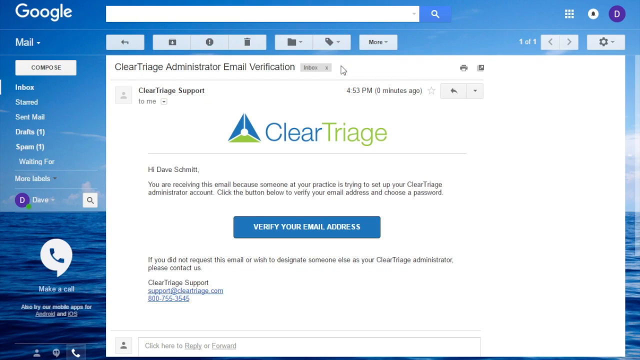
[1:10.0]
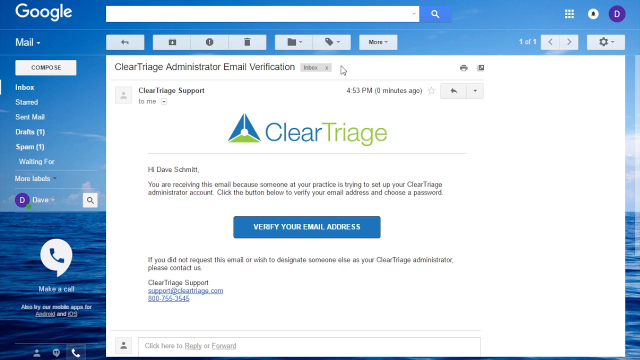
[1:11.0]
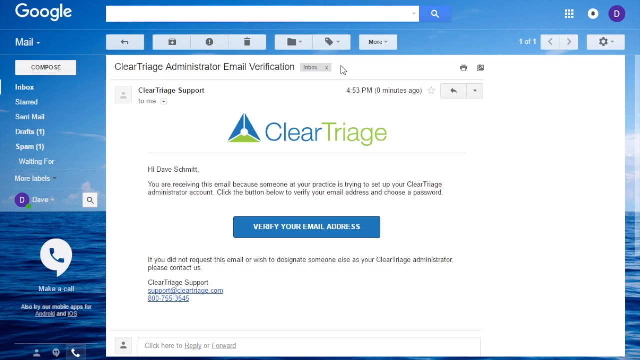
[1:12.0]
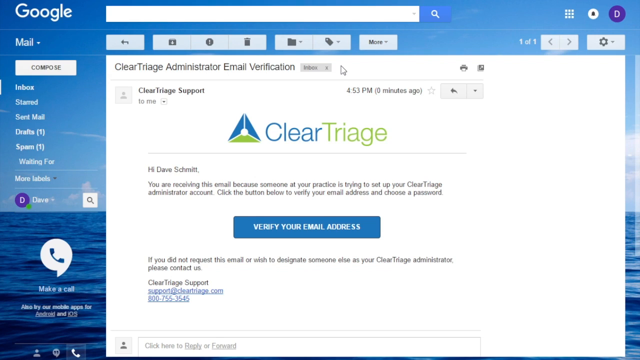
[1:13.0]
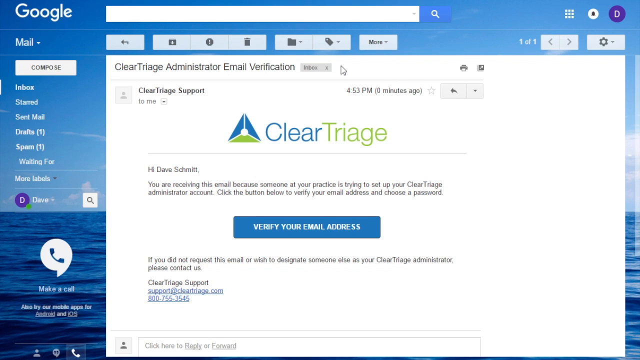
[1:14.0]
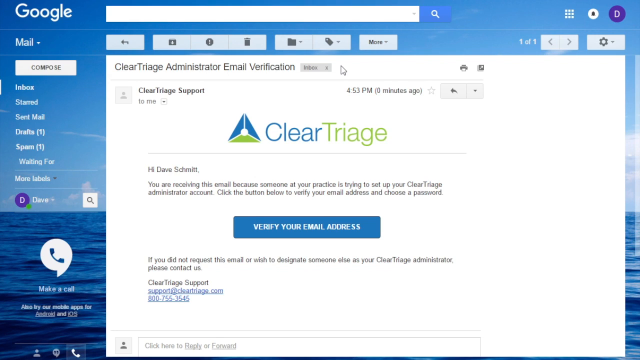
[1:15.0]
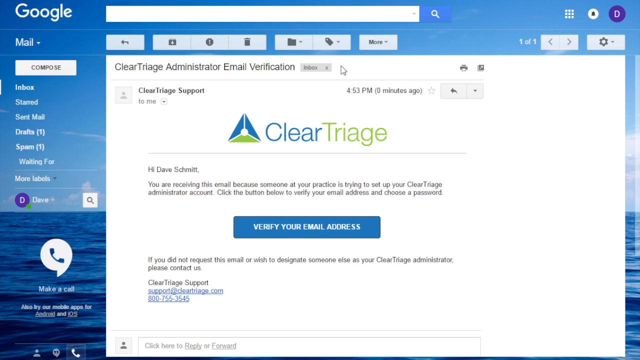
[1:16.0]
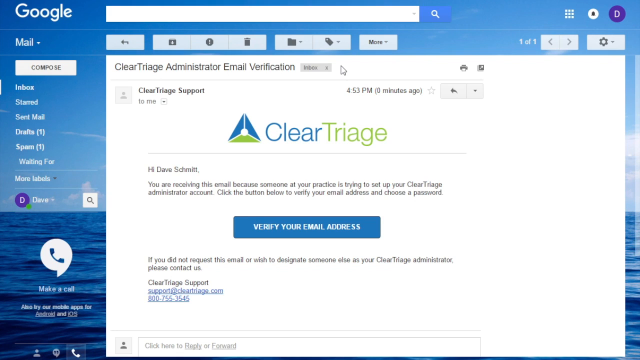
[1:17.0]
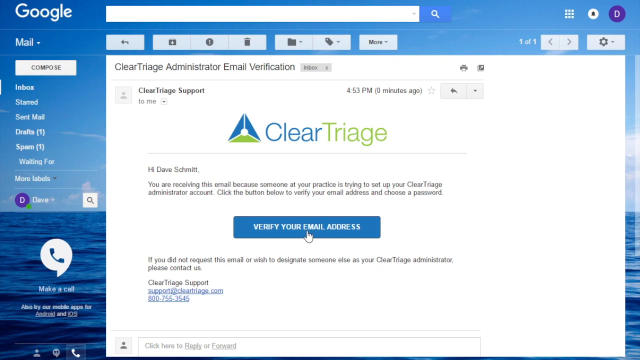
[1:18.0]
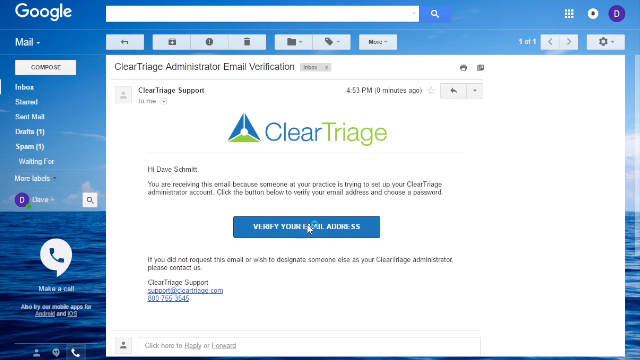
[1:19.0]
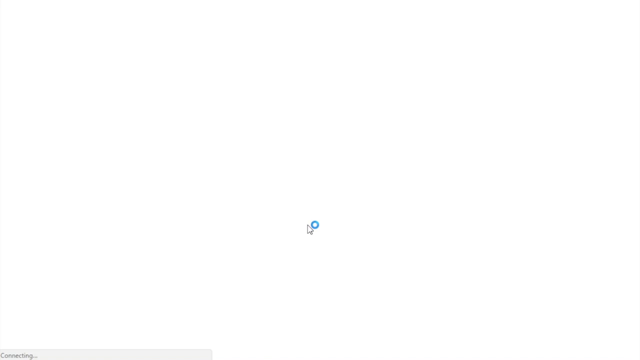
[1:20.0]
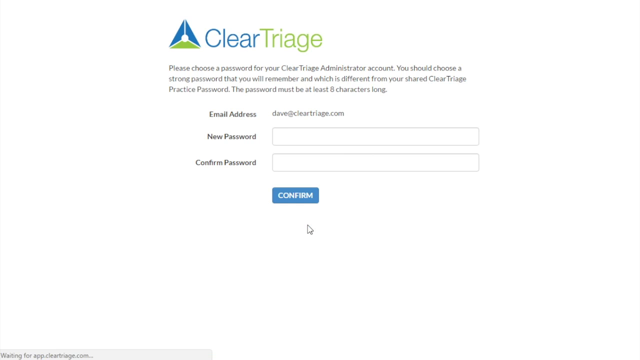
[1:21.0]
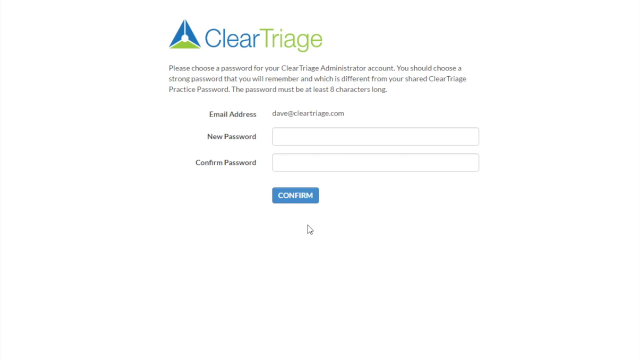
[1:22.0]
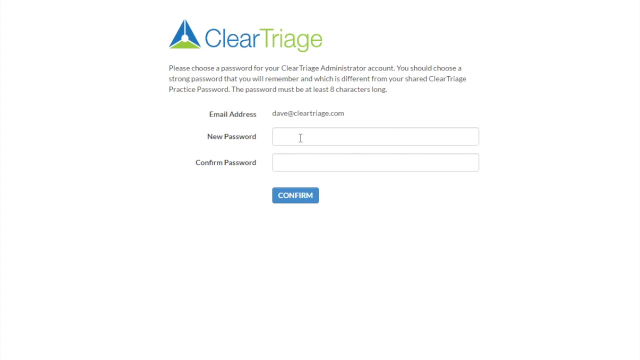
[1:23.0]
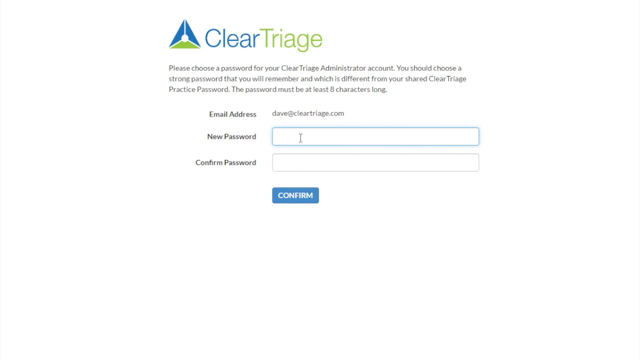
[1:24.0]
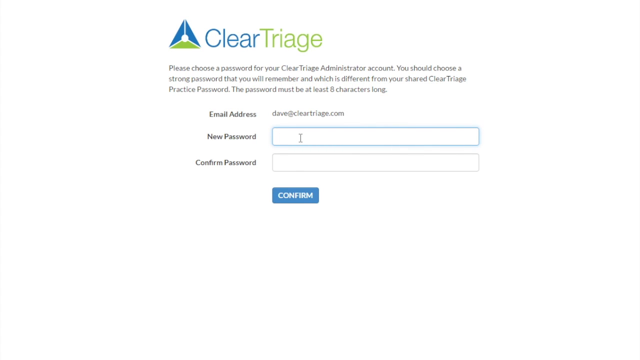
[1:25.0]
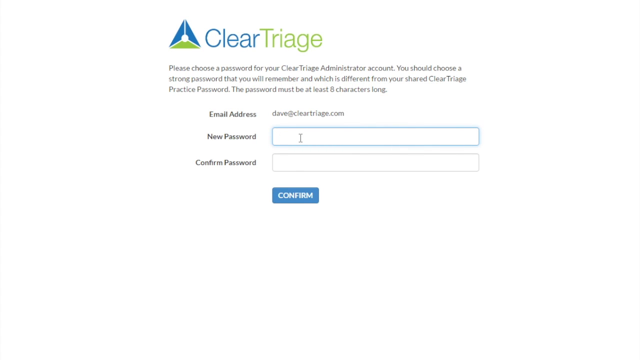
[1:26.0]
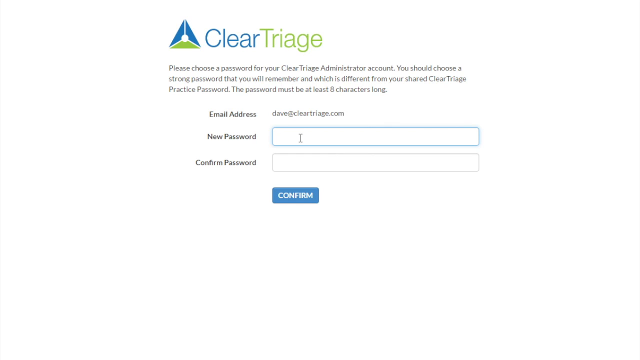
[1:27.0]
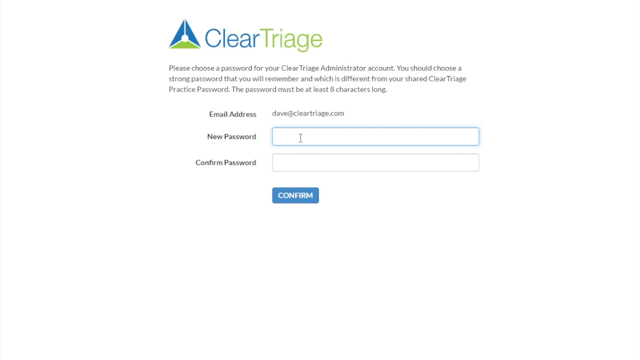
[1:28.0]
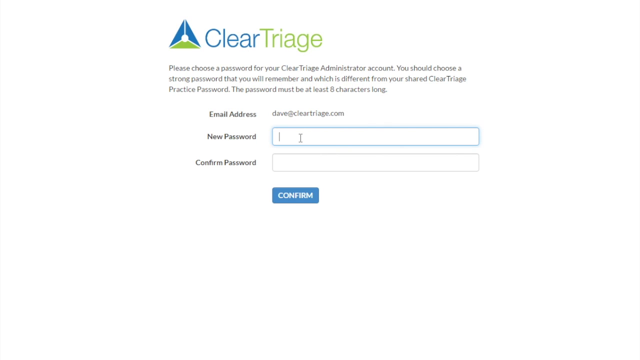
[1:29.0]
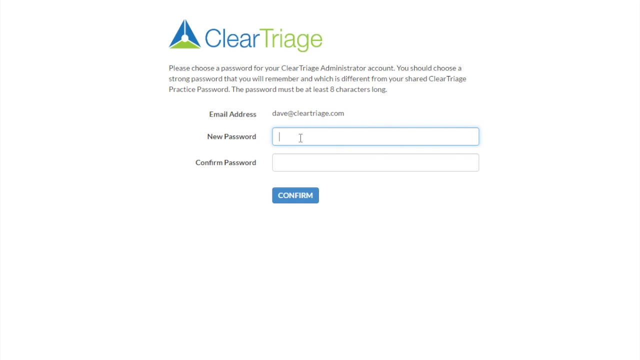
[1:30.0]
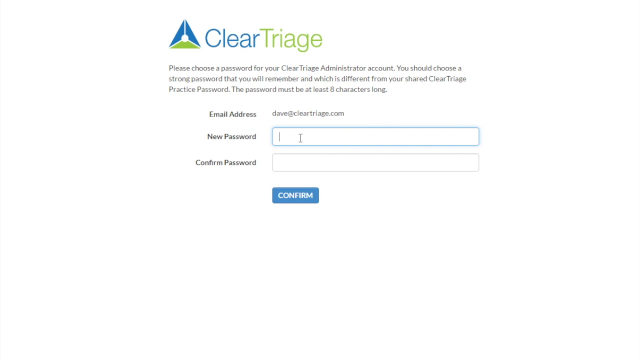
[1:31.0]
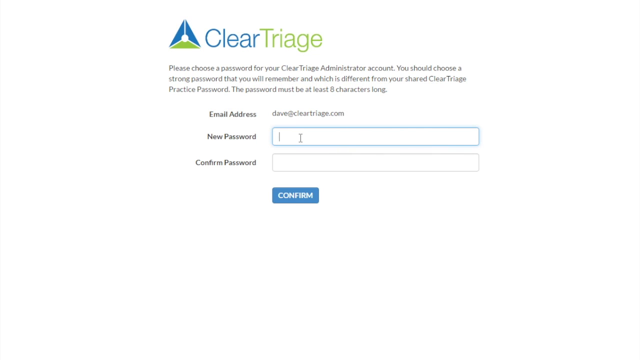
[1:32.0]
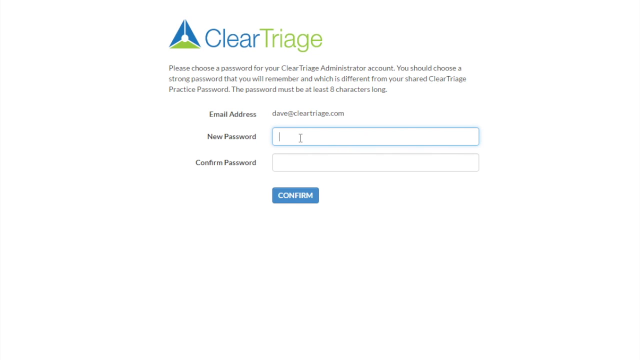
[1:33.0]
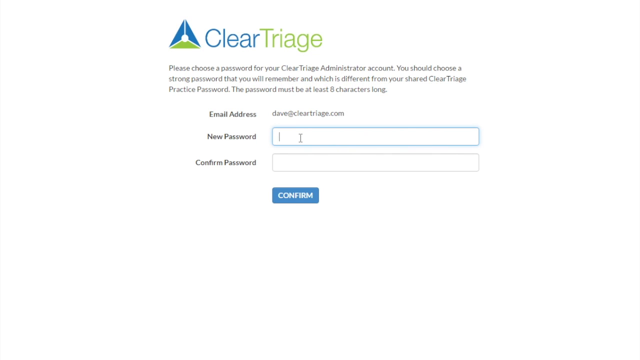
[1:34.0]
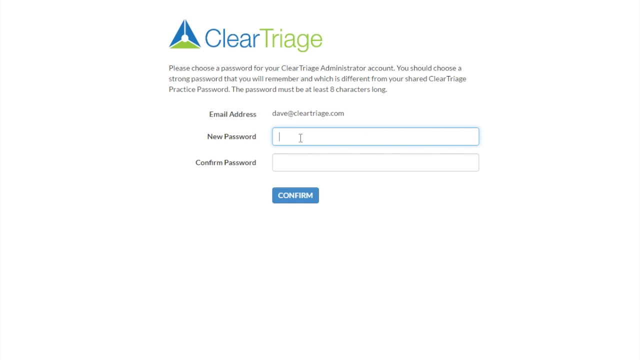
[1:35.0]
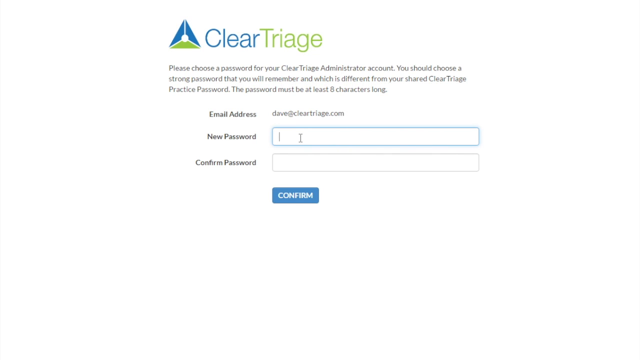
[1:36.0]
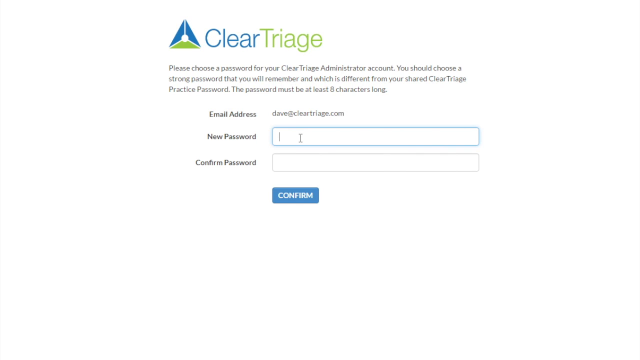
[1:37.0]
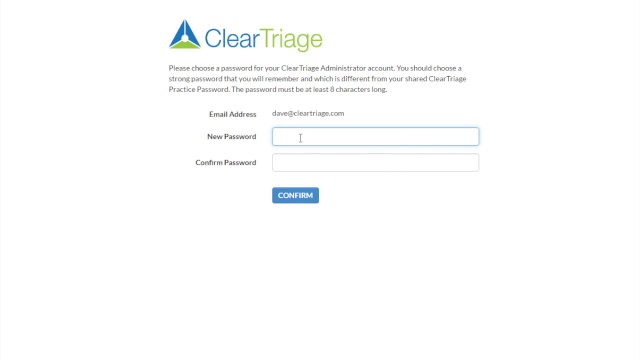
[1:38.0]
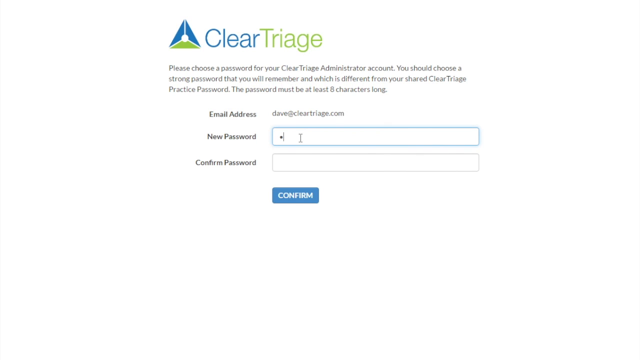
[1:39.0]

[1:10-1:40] In Dave Schmidt's Google Mail inbox, the email from Clear Triage Support is open, reading "you're receiving this email because someone at your practice is trying to set up your Clear Triage administrator account. Click the button below to verify your email address and choose a password." Below is a verify your email address button, and the email continues: "if you did not request this email or wish to designate someone else as your Clear Triage administrator please contact us." The mouse clicks verify your email address, and the screen changes to a page with the Clear Triage logo reading "please choose a password for your clear triage administrator account. You should choose a strong password that you will remember and which is different from your shared clear triage practice password. The password must be at least eight characters long". The page shows the email address for Dave and fields for a new password and password confirmation. The mouse clicks the new password box, the cursor flashes, and Dave begins typing his password.